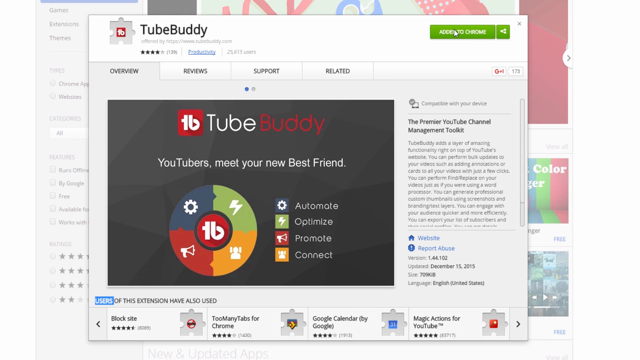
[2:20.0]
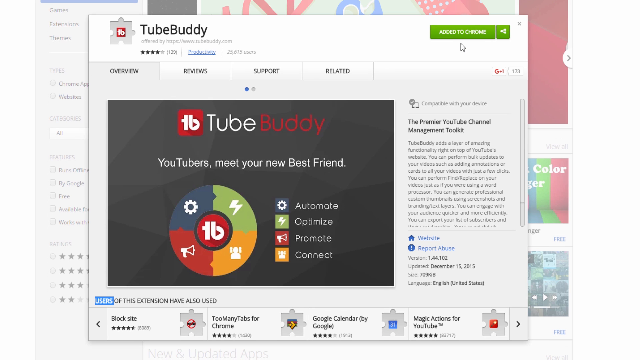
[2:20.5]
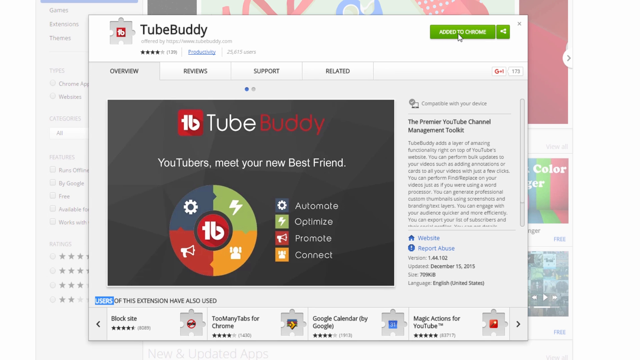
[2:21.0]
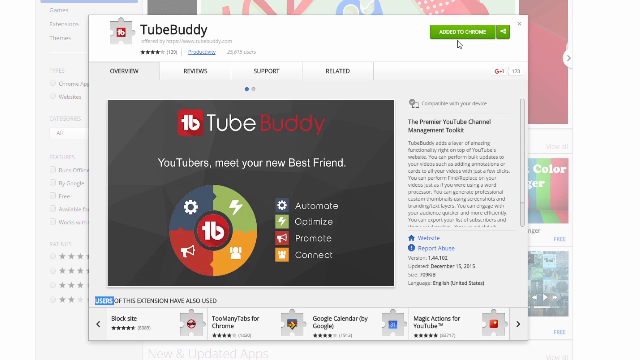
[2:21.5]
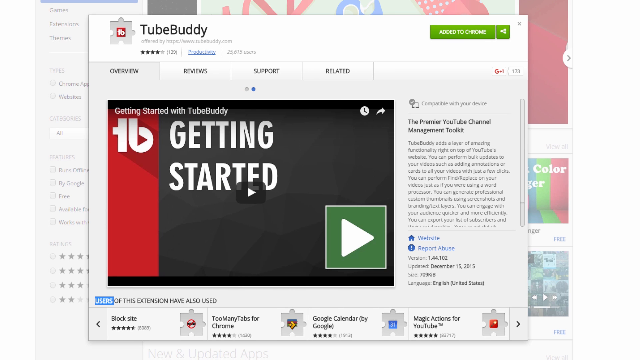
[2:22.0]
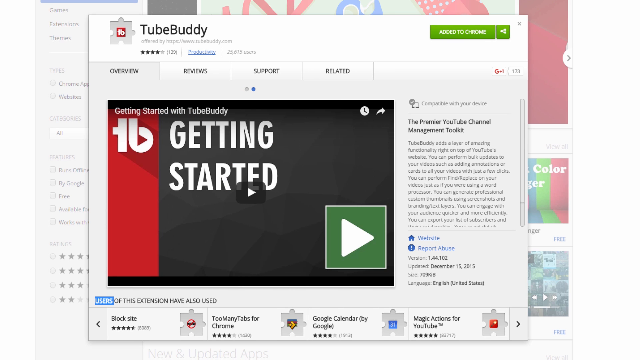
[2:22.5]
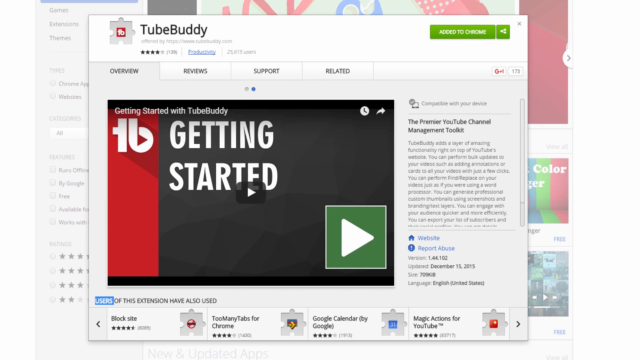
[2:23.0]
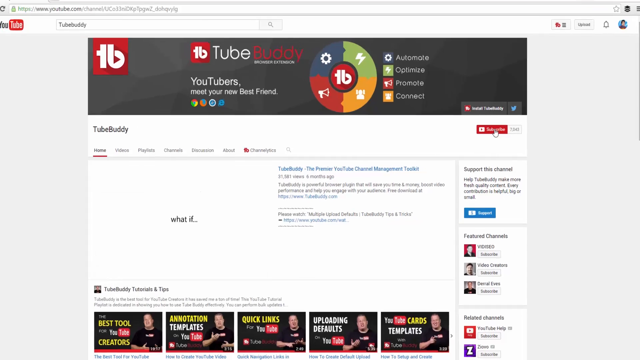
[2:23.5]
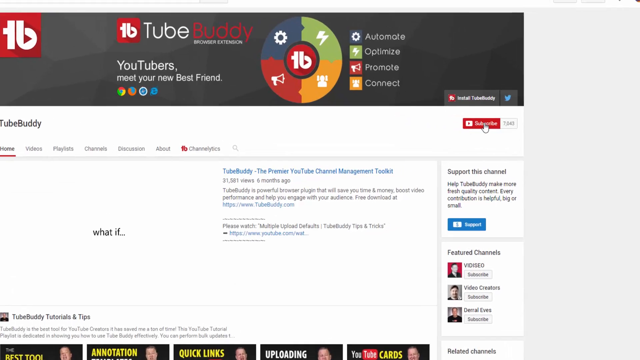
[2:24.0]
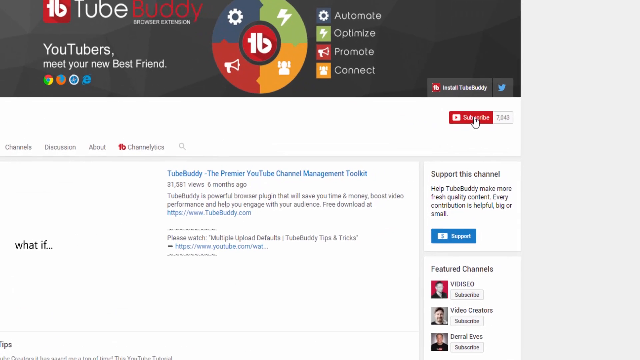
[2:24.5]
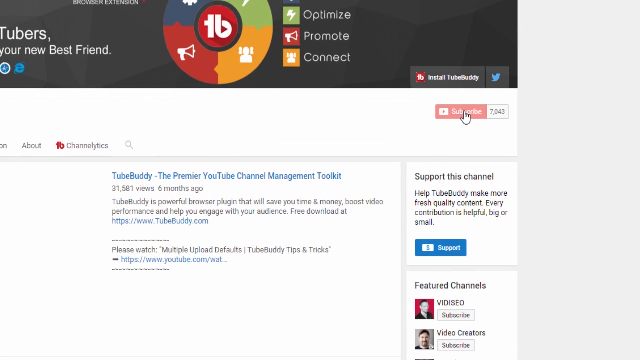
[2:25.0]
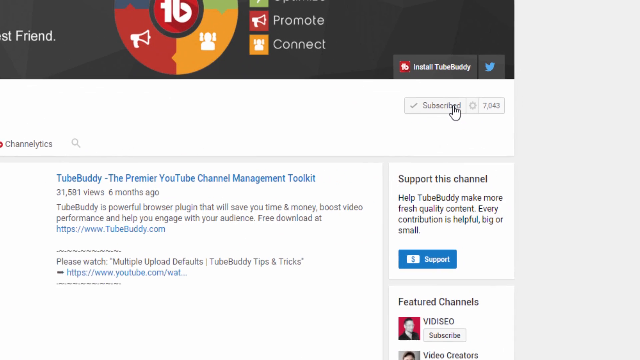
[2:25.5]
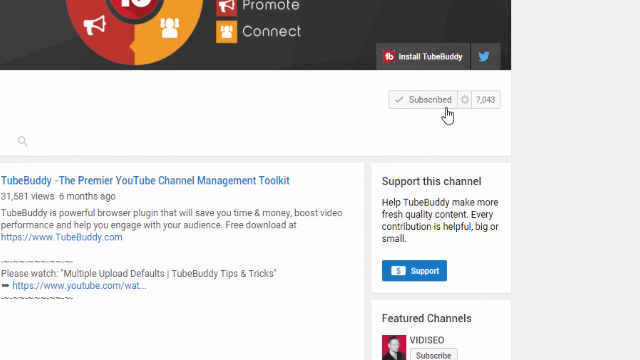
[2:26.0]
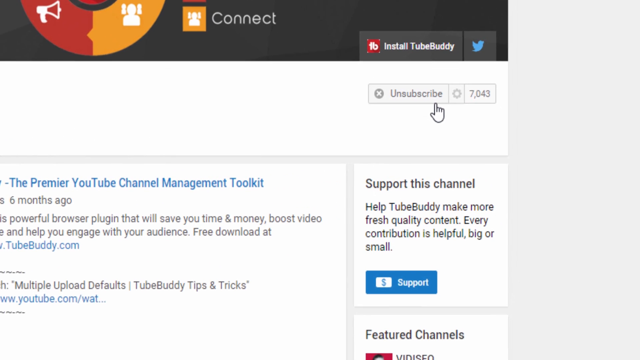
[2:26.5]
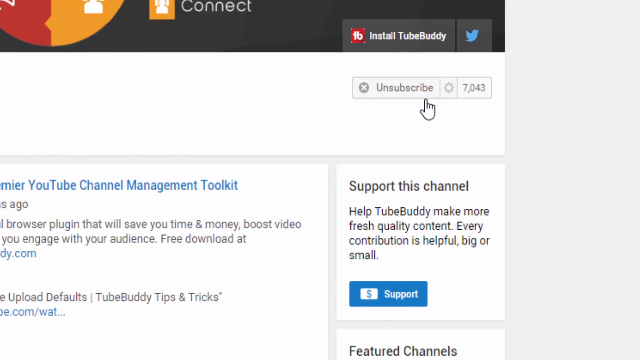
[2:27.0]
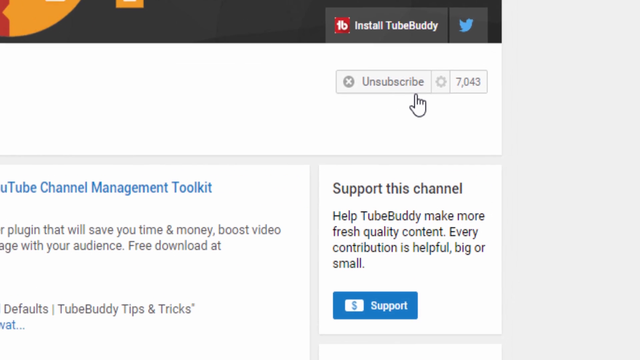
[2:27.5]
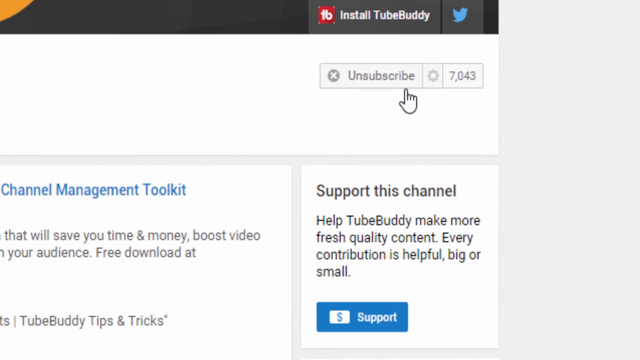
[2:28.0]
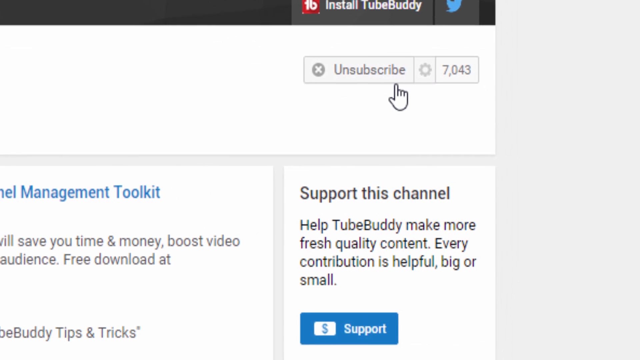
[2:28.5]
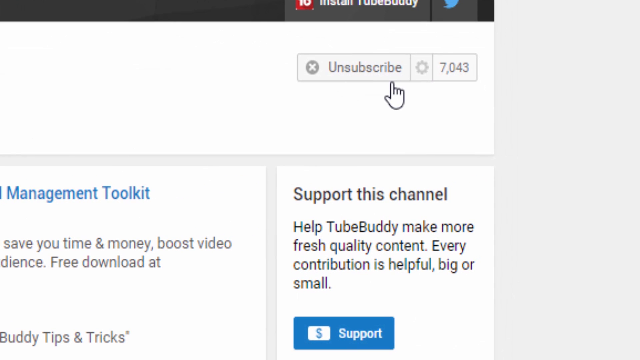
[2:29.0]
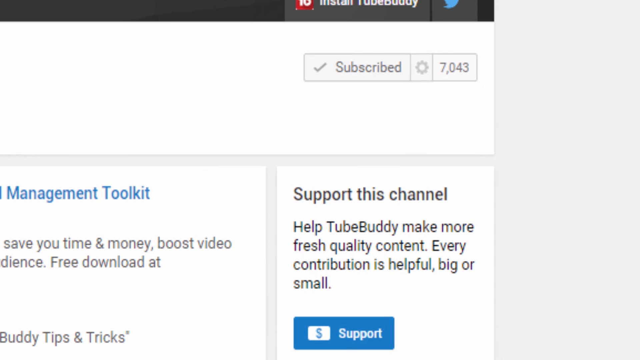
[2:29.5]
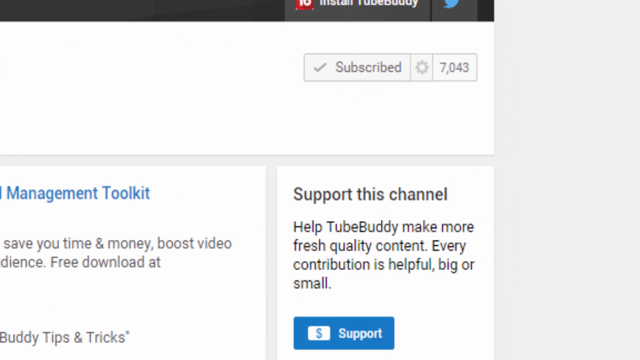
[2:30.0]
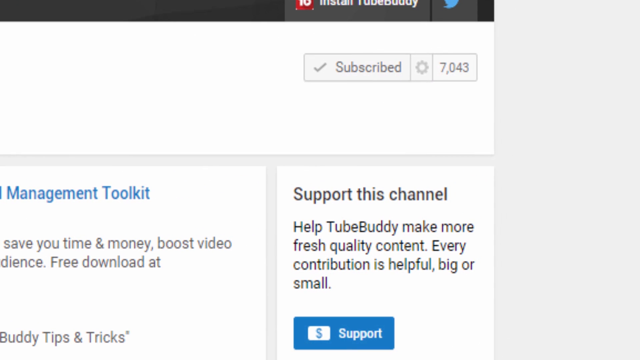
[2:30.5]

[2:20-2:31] The person adds the TubeBuddy application to their Chrome browser. The TubeBuddy information shows 4 out of 5 stars and reads "TubeBuddy adds a layer of amazing functionality right on top of YouTube's website. You can perform bulk updates to your videos such as adding announcements, annotations", followed by further lines including "You can generate professional custom thumbnails using screenshots and branding / text layers" and "You can engage with your audience quicker and more efficiently."